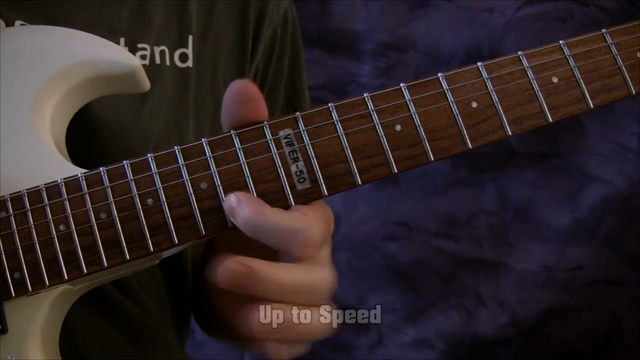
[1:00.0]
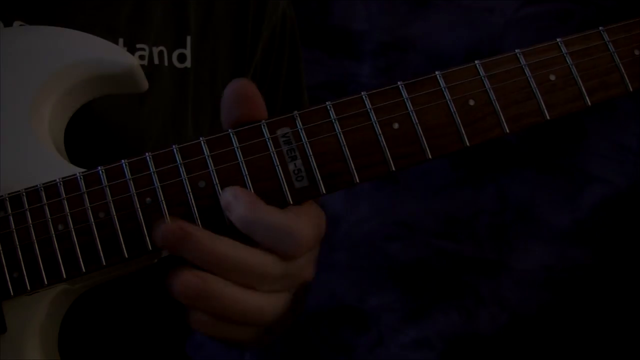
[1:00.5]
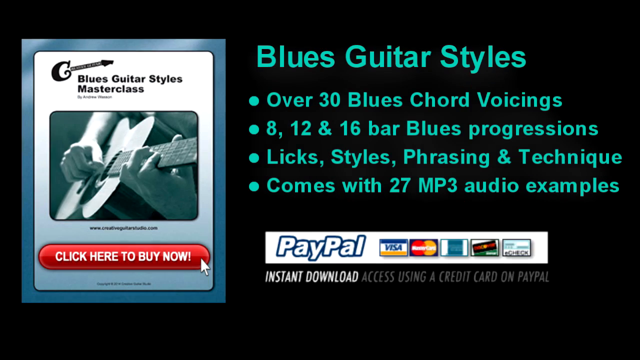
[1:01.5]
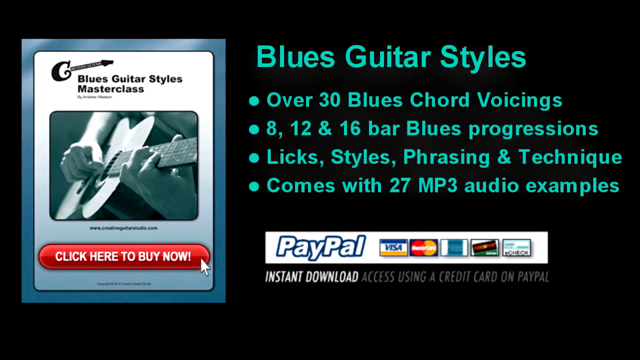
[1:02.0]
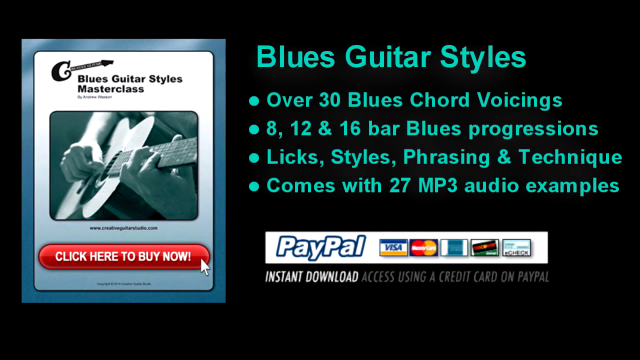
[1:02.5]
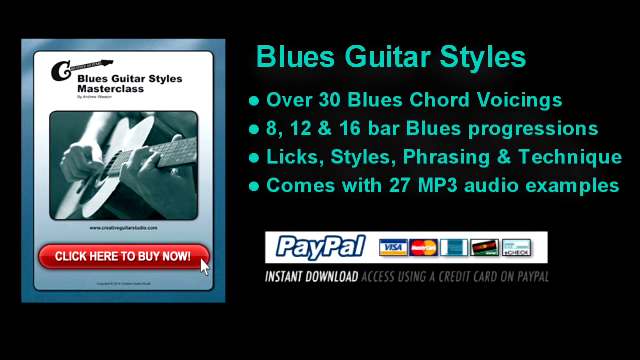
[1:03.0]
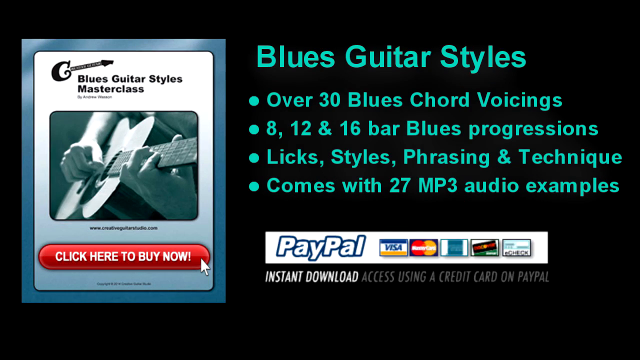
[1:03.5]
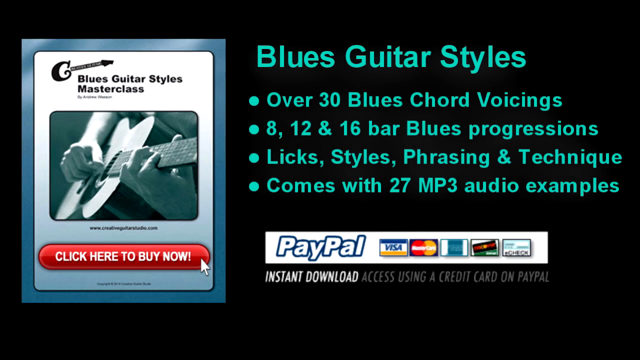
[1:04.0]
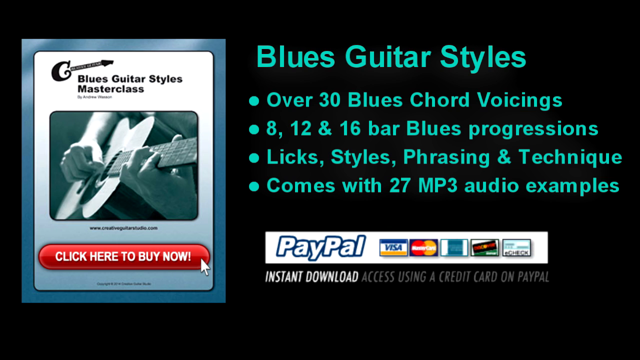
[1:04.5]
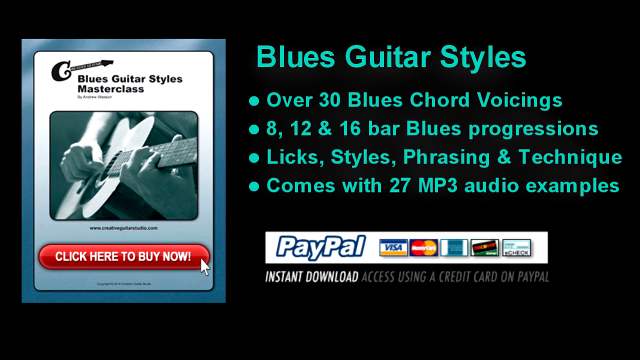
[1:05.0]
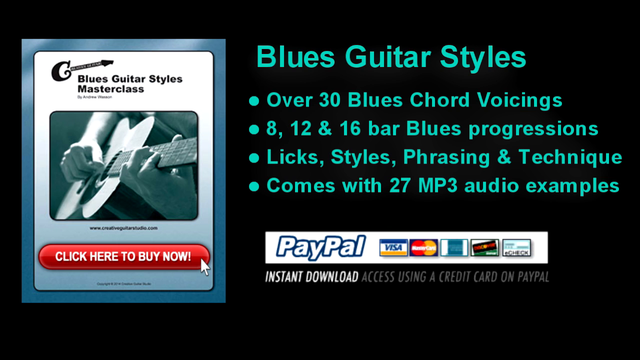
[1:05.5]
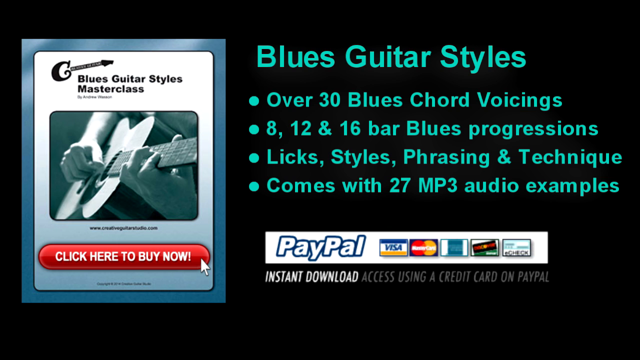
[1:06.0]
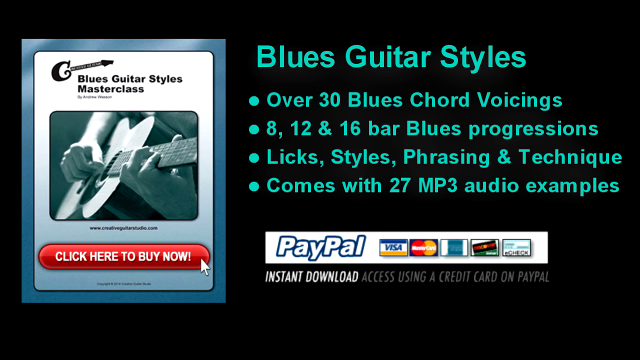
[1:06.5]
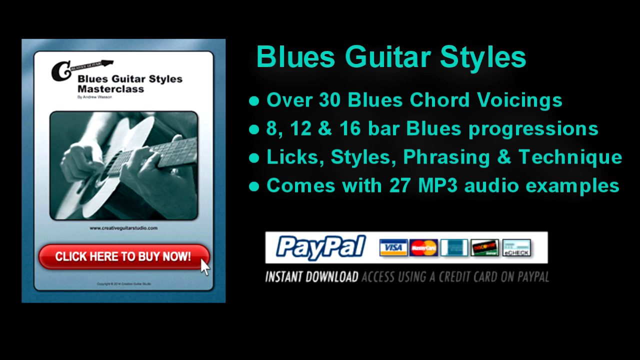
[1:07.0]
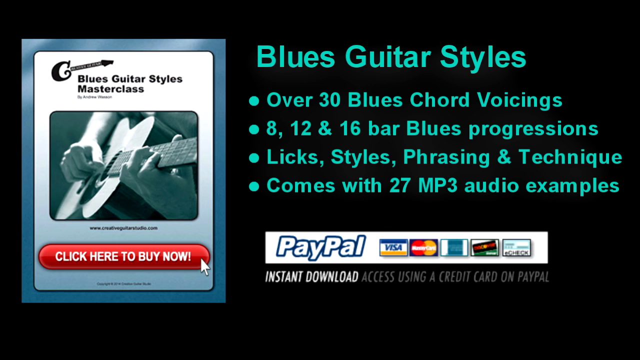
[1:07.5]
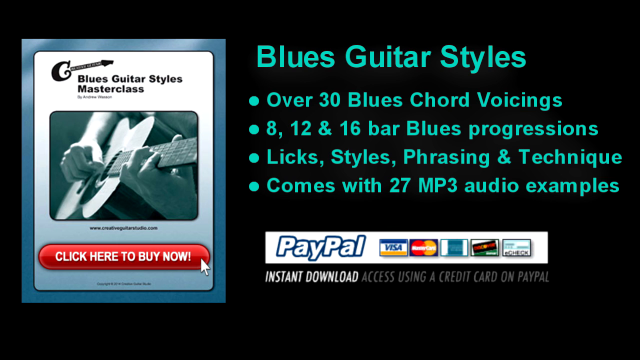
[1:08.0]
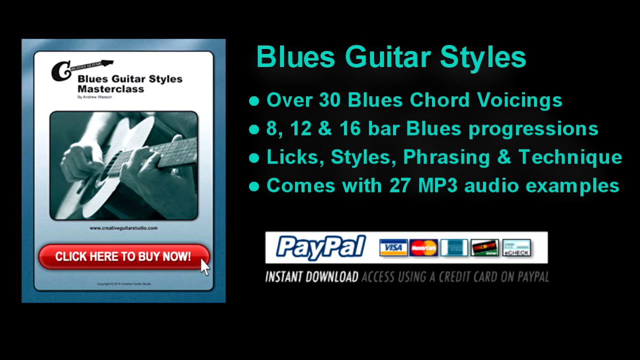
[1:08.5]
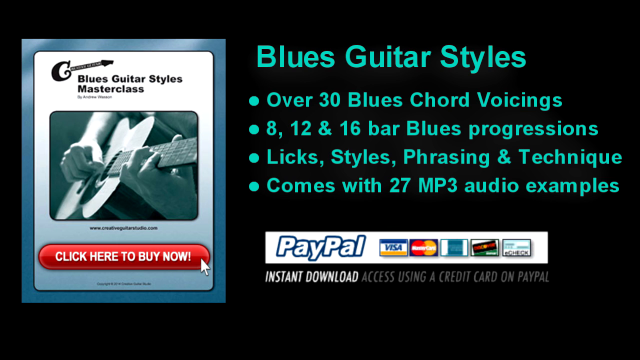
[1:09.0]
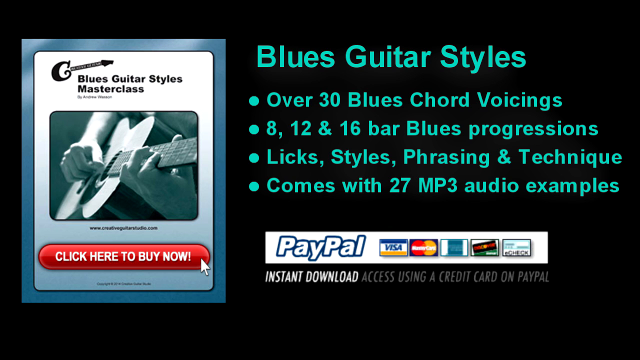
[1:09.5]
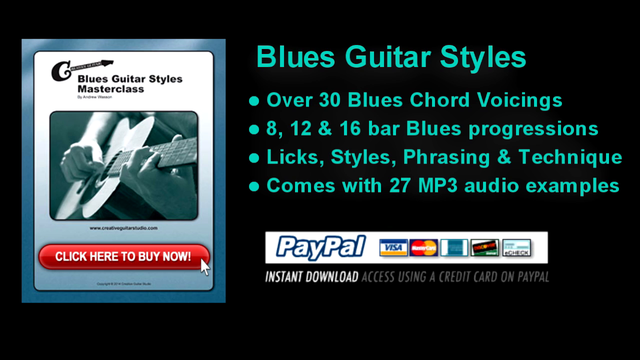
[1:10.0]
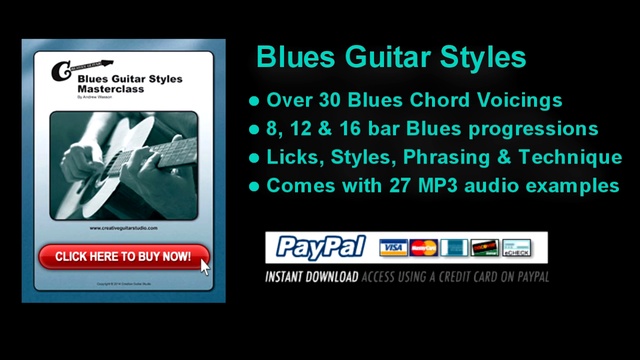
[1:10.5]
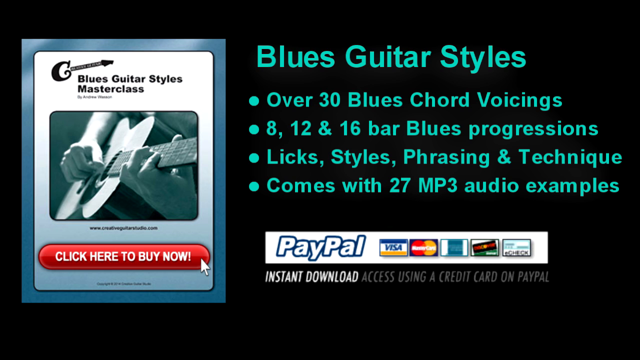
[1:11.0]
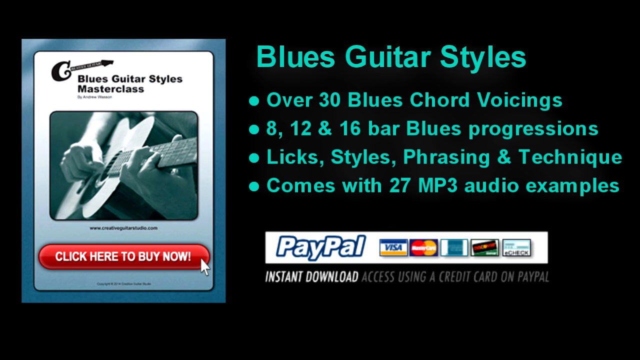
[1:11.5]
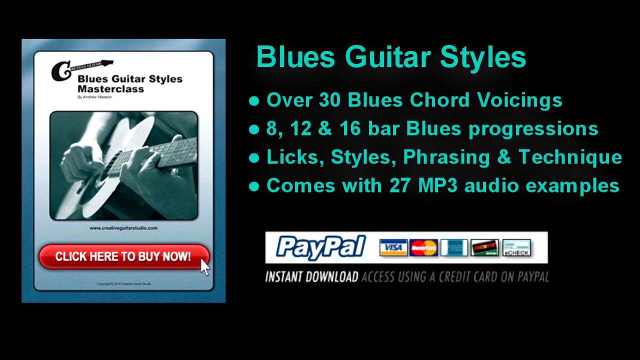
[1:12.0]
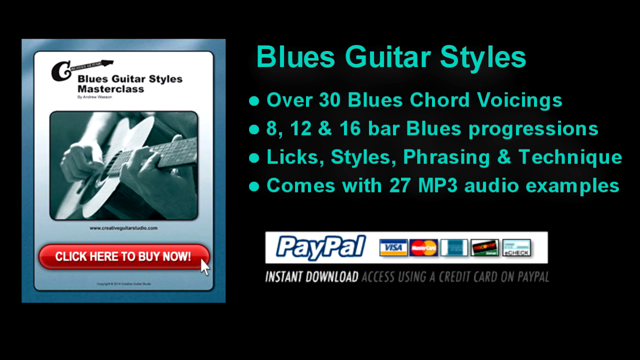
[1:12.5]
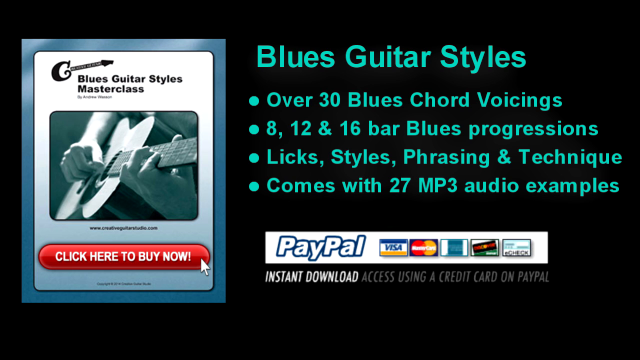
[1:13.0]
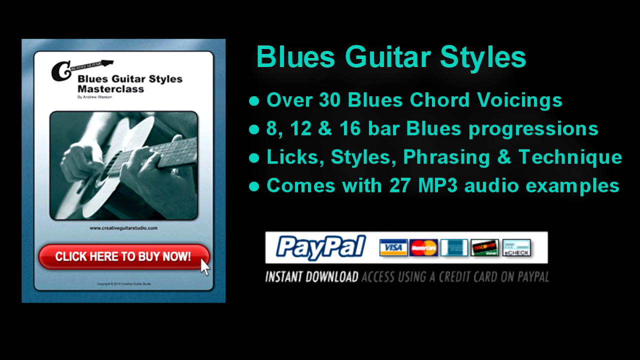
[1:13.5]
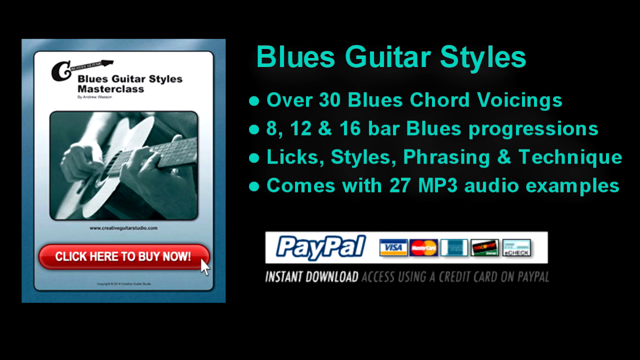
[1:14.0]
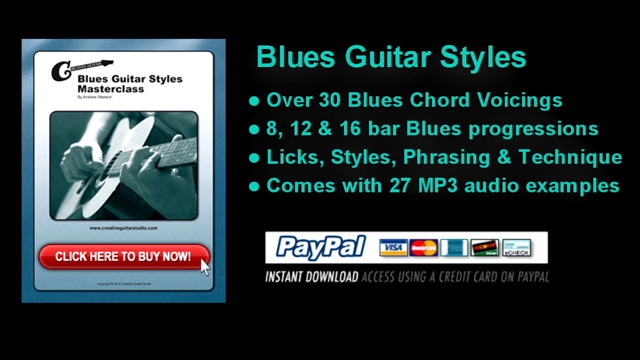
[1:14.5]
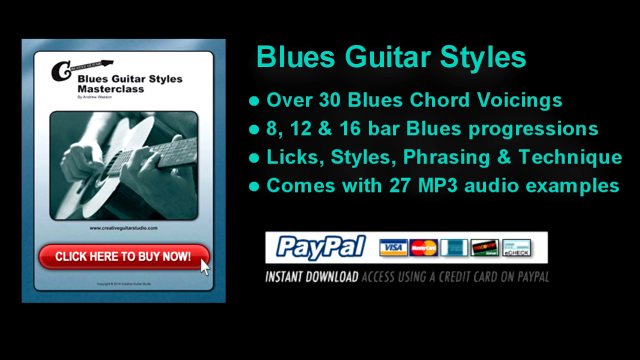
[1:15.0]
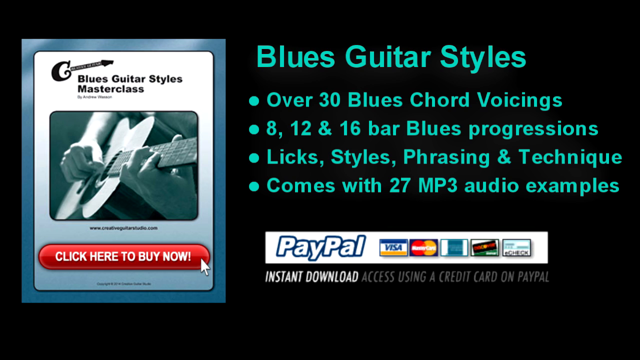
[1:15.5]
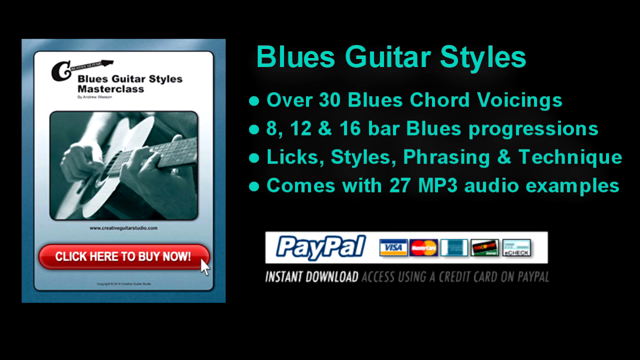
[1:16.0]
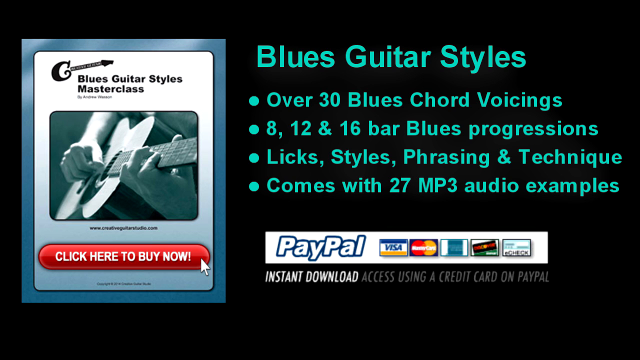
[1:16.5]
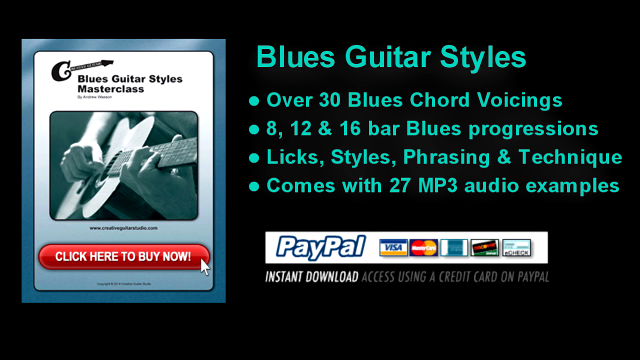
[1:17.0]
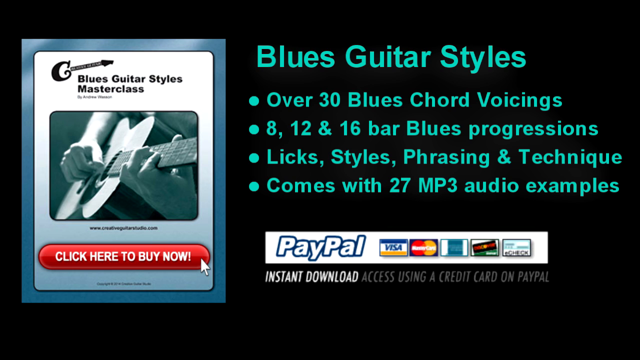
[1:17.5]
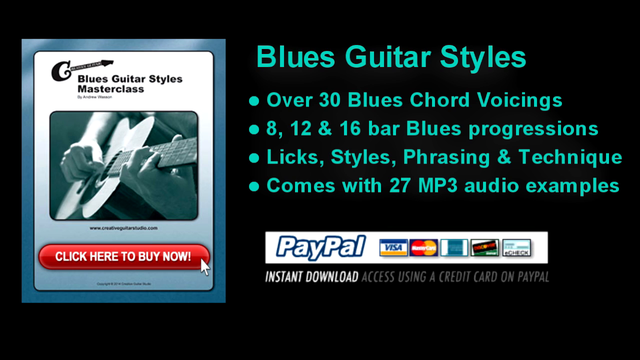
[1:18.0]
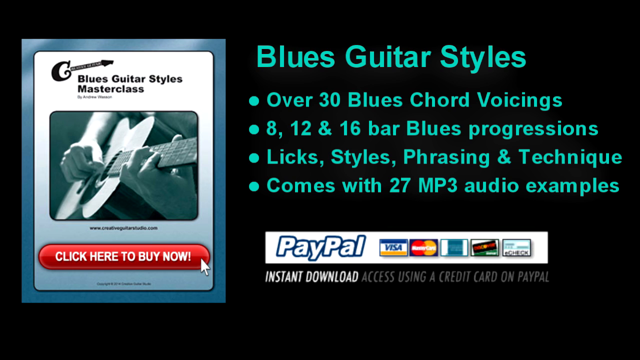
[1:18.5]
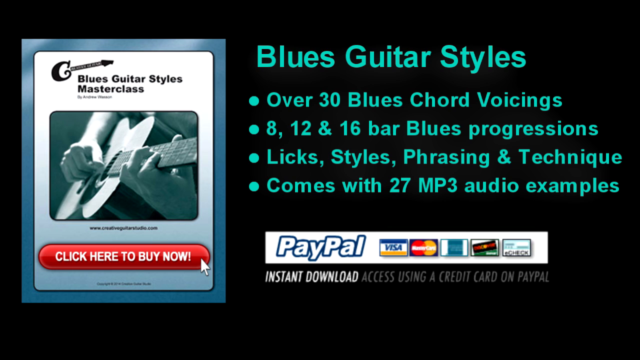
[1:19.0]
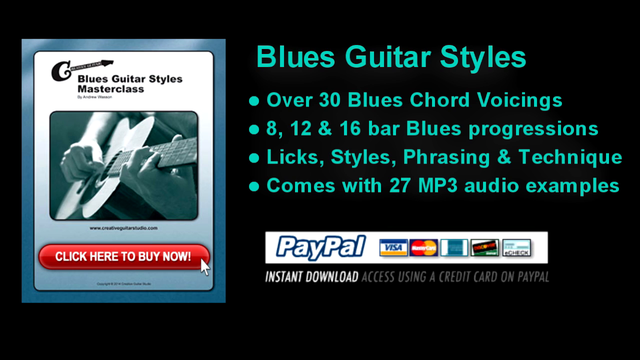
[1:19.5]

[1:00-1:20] The same person, whose face is not visible, wears a forest green shirt with white lettering and plays the guitar up to speed. The guitar has a white body, not fully visible, with a curve that goes upwards; mostly the strings are seen. Hard-to-read lettering on the top part of the guitar looks like "V-E-R-5-0." The video then cuts to an ad for "Blues Guitar Styles Masterclass," listing in neon bullet points over 30 blues chord voicings; 8, 12, and 16 bar blues progressions; licks, styles, phrasing, and techniques; and 27 mp3 audio examples. A photo shows someone playing a guitar, with only the arms and the guitar visible, and there is an option to click here and buy now. At the bottom of the page are payment options: PayPal, Visa, Mastercard, Discover, and two others that are difficult to make out, along with instant download access using a credit card or PayPal.